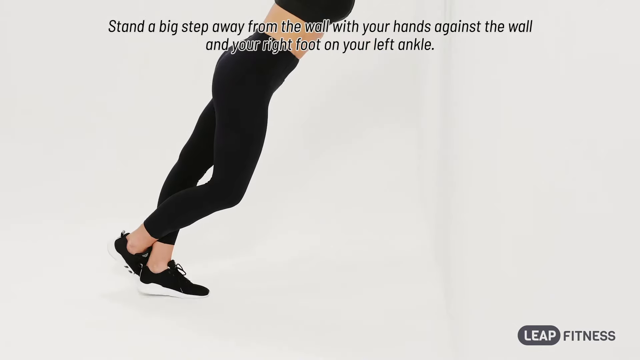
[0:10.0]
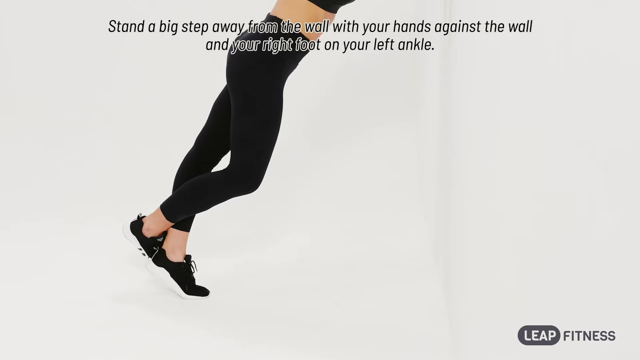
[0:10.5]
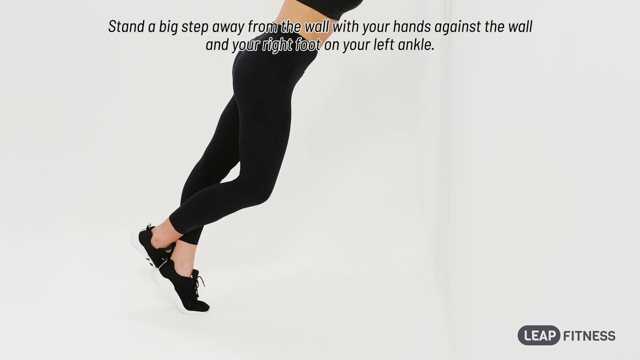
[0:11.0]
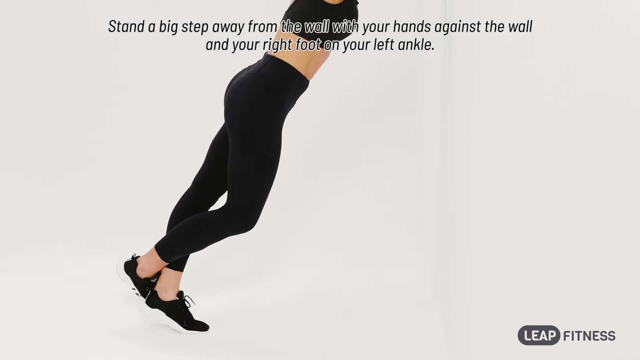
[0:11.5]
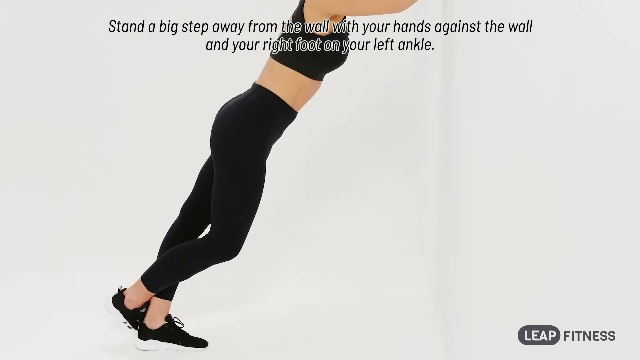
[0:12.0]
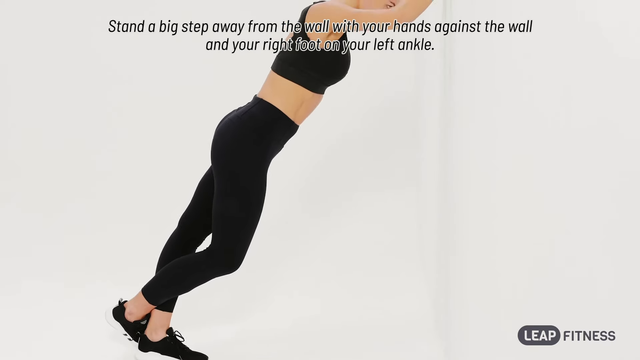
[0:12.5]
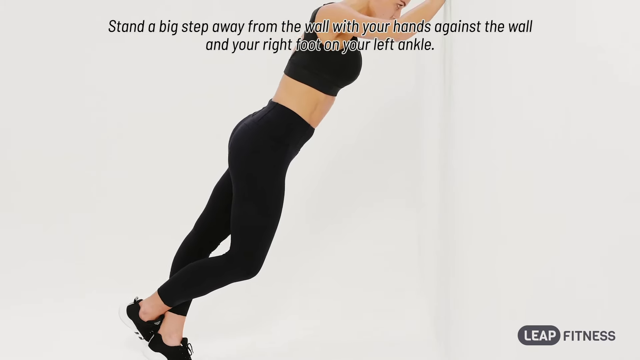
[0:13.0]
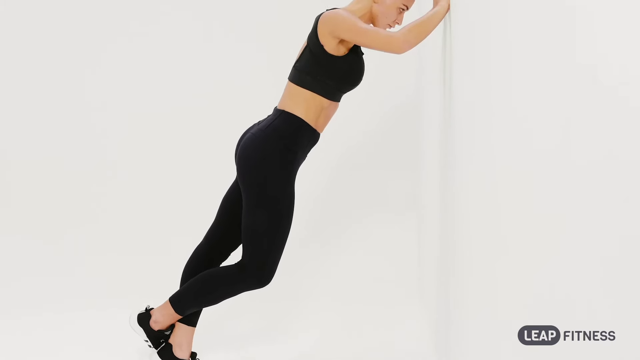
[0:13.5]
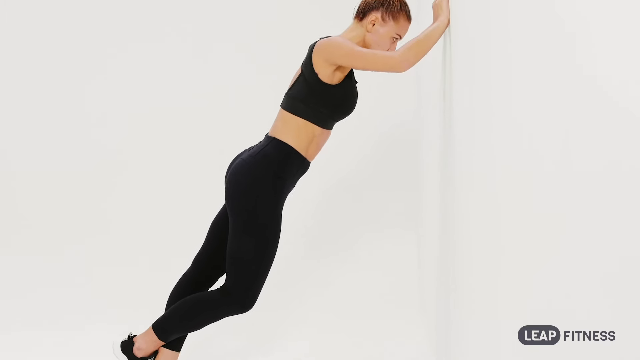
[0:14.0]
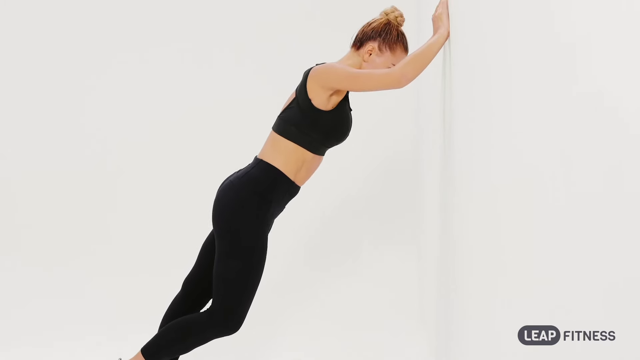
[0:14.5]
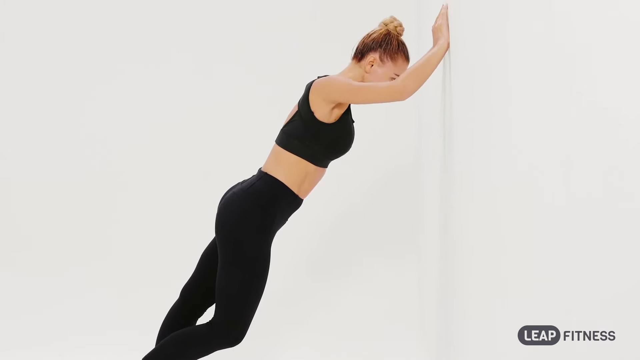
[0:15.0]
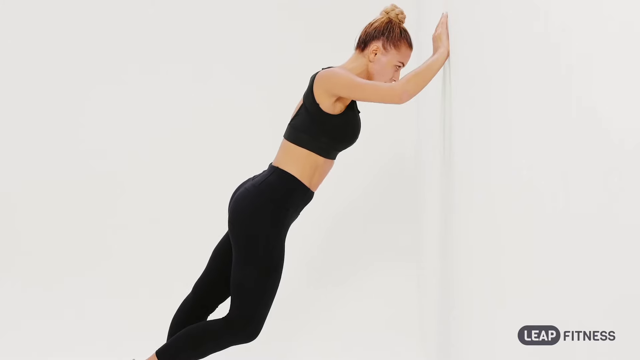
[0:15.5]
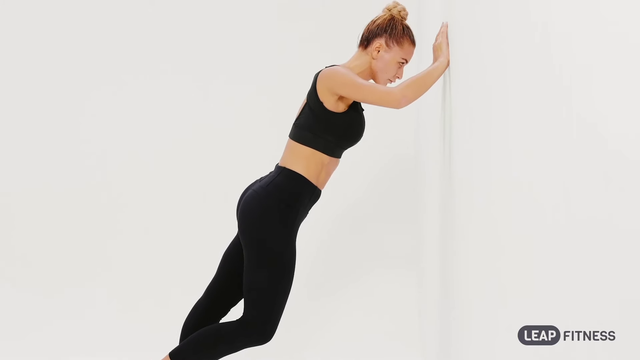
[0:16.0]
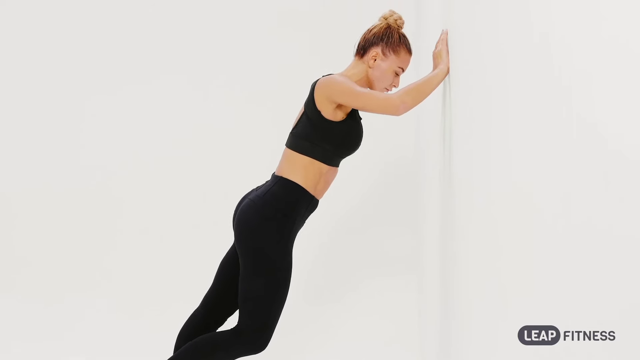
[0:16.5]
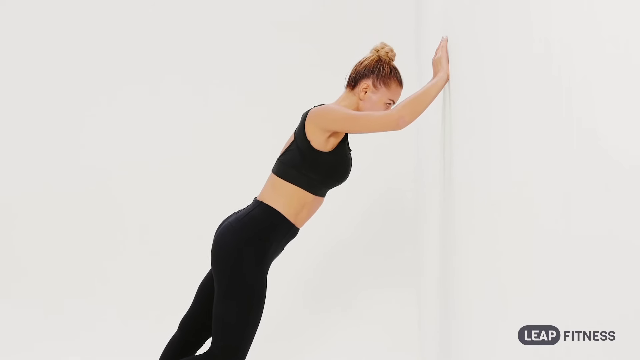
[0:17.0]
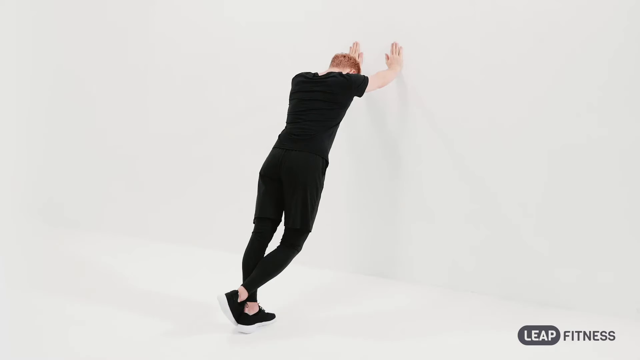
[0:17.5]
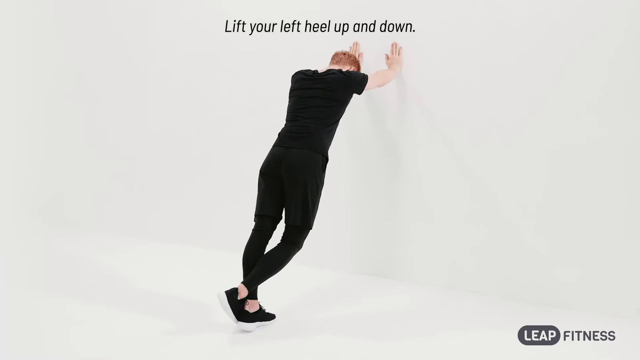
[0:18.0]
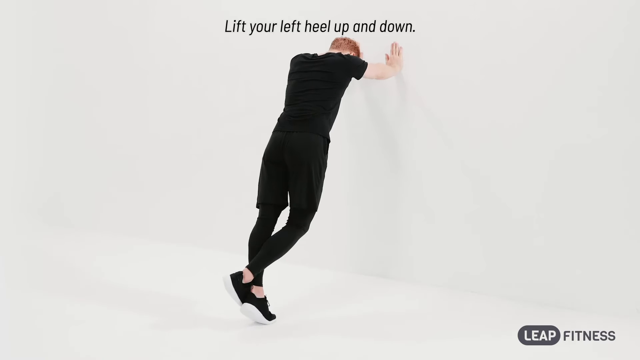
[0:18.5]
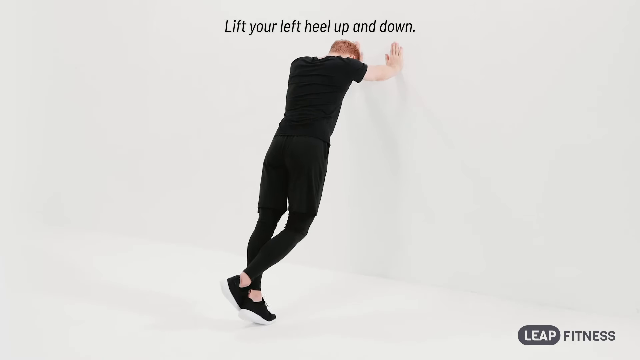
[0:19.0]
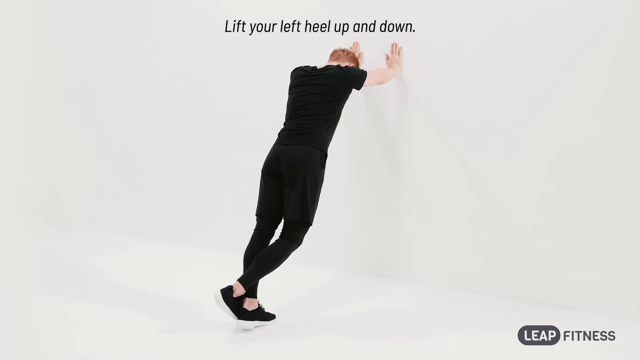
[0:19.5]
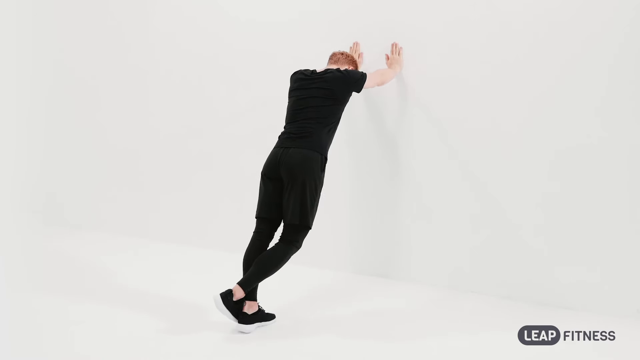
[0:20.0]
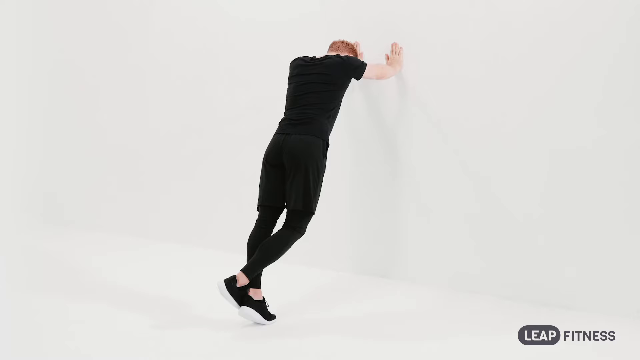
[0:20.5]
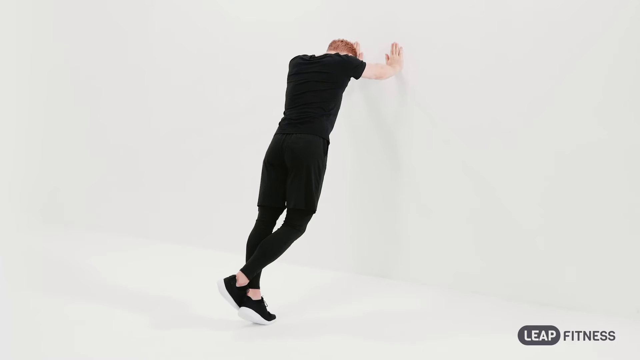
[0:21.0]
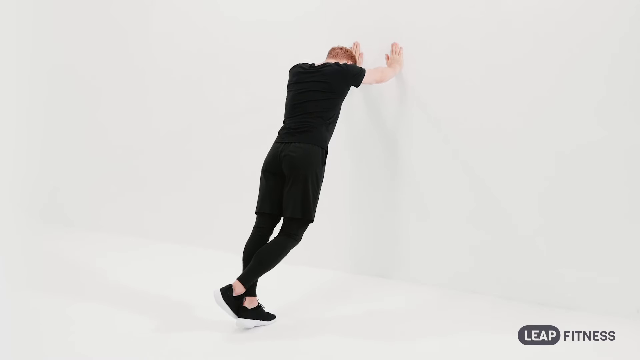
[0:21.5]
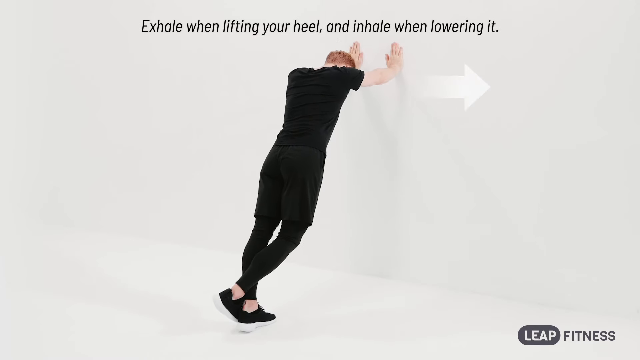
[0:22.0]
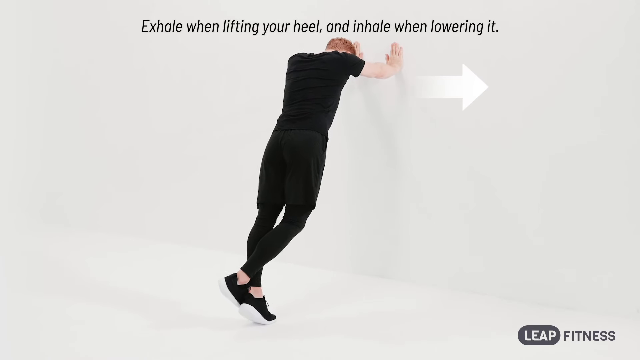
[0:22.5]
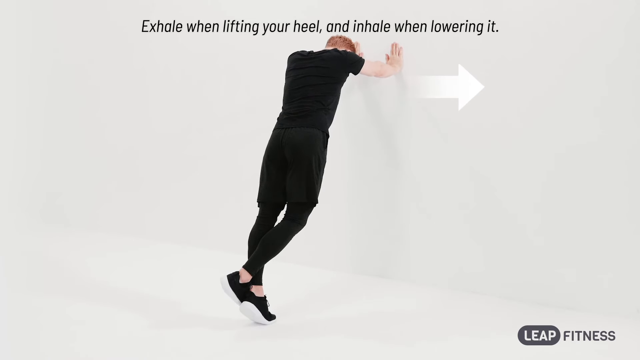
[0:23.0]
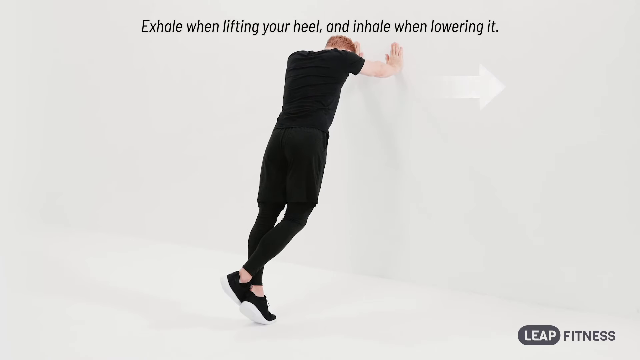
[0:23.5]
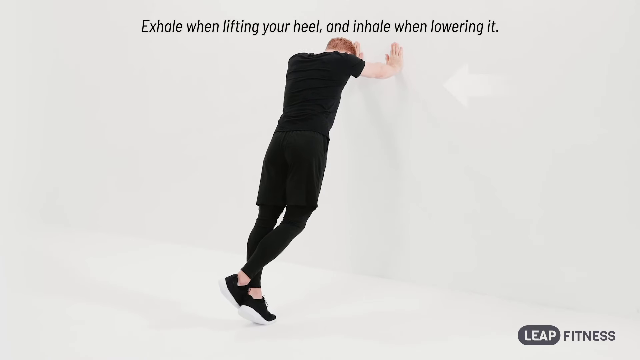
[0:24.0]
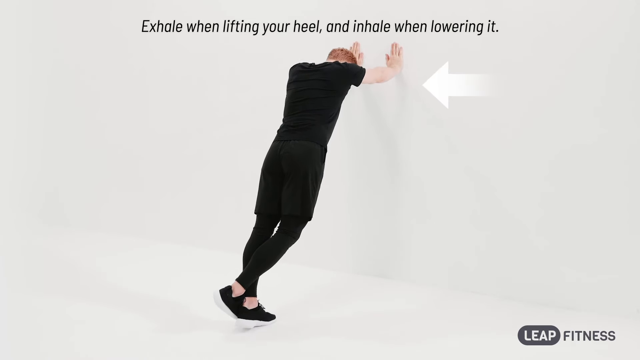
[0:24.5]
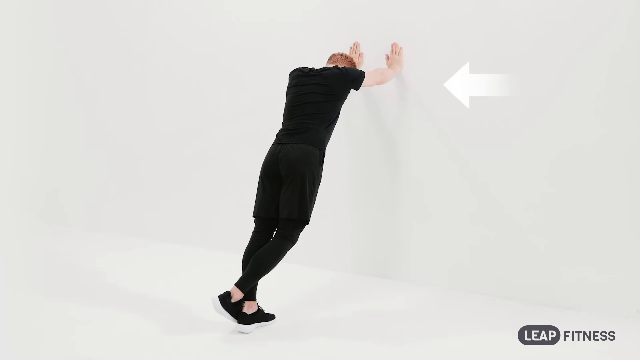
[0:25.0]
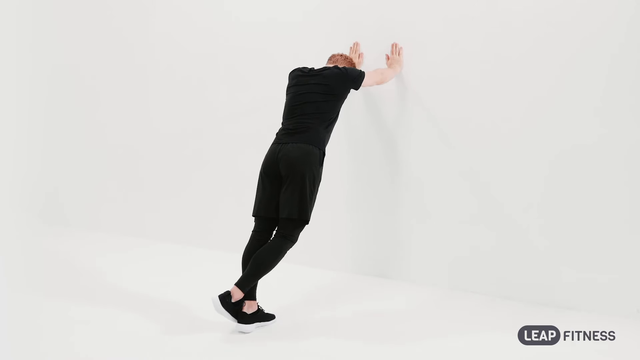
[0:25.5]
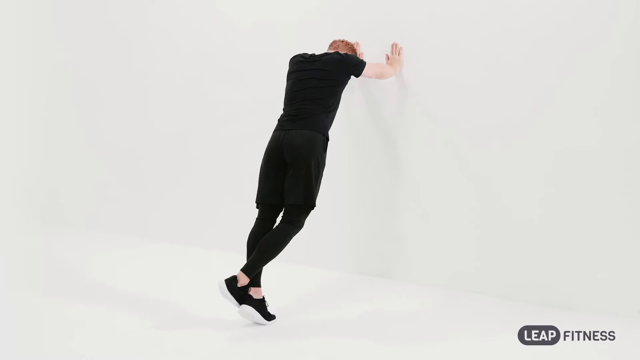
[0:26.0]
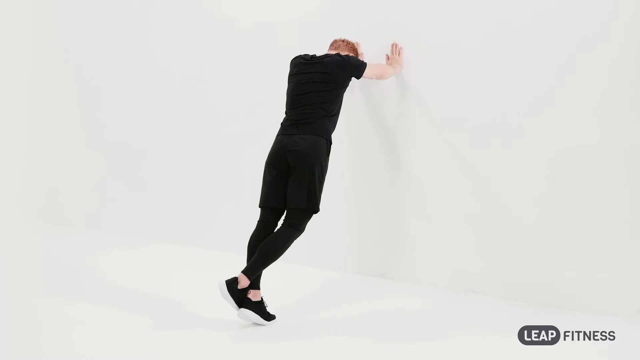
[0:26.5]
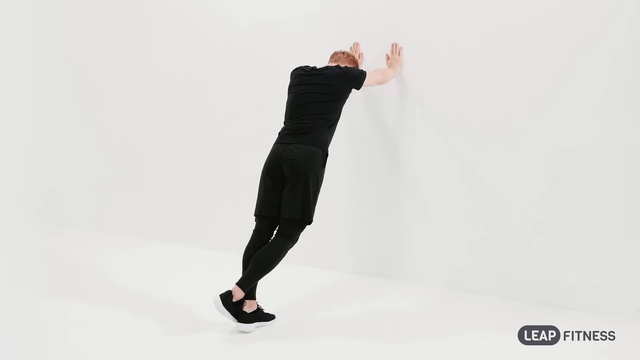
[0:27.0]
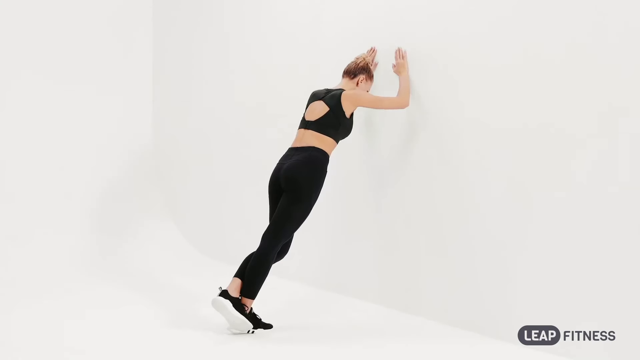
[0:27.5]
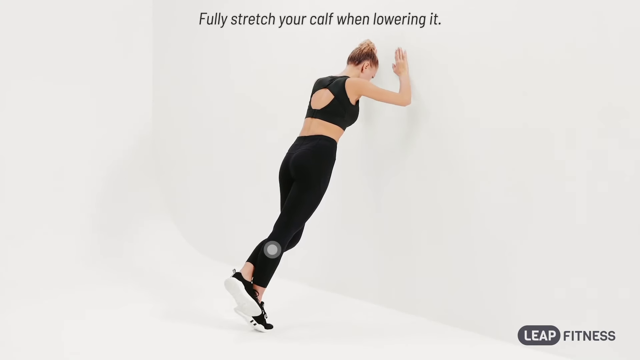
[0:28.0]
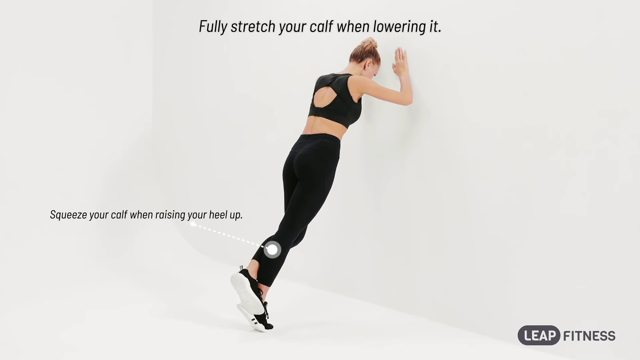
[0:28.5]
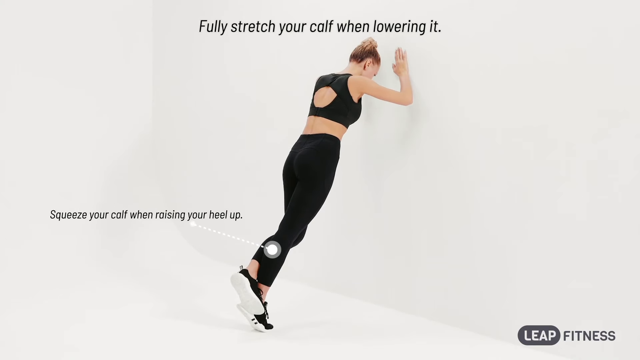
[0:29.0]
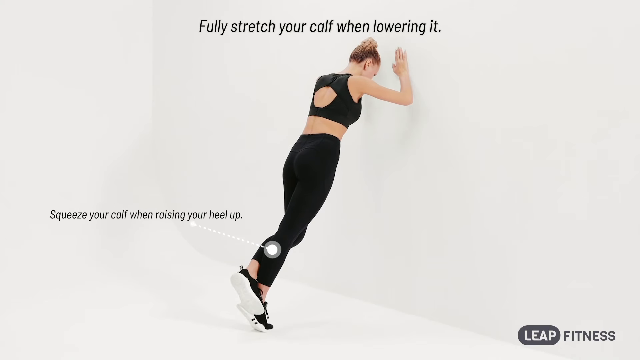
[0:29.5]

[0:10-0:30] Text on the screen reads "stand a big step away from the wall with your hands against the wall and your right foot on your left ankle." The woman has only one foot on the ground, with her other foot resting on the back of her ankle. She pushes off the floor with her left foot and rises to stand on the tiptoe of that foot while her right foot rests behind her left ankle, so her body slowly rises into the air and then goes back down. The exercise is shown from two different angles, apparently with another person as well. Each time, they push off the ground with the left foot, rise onto the tiptoe, let the foot back down to stand flat on the floor, and push up again, using one foot to raise their entire body and working the calf muscle.